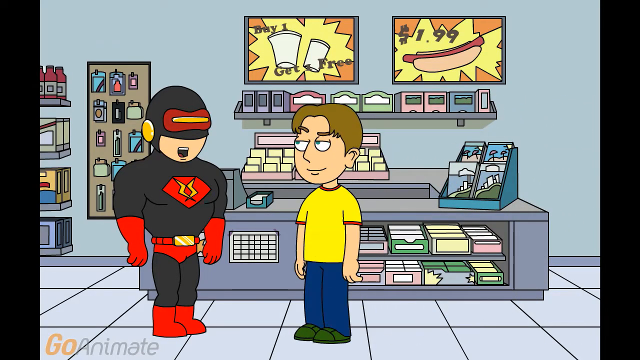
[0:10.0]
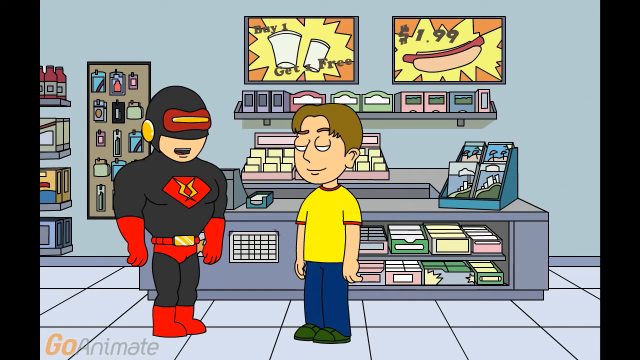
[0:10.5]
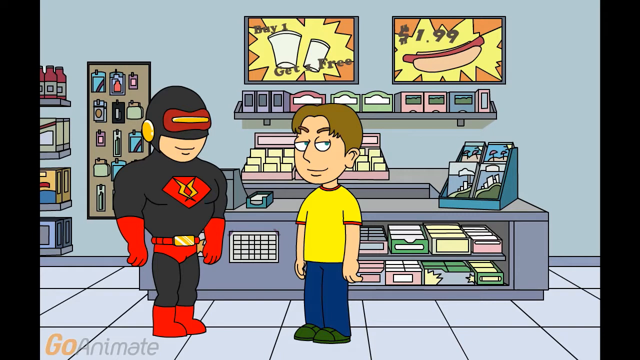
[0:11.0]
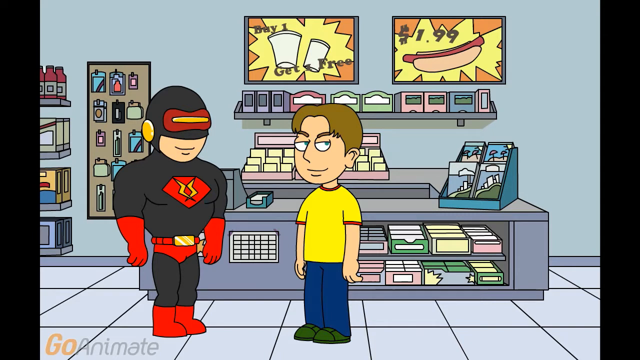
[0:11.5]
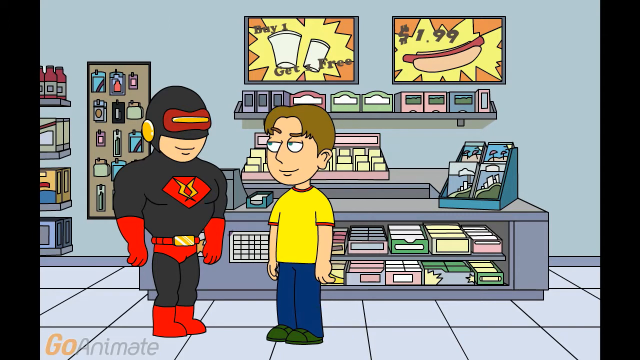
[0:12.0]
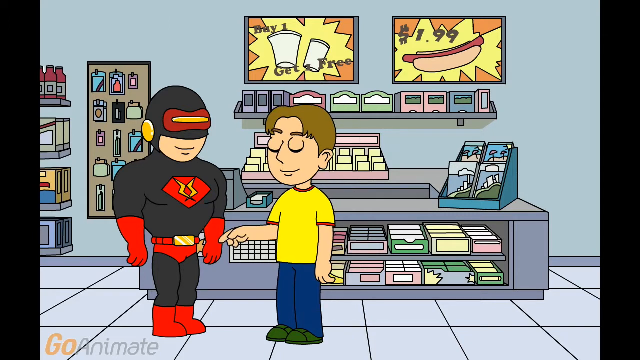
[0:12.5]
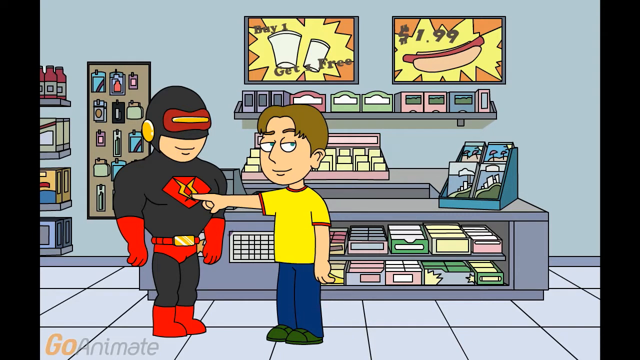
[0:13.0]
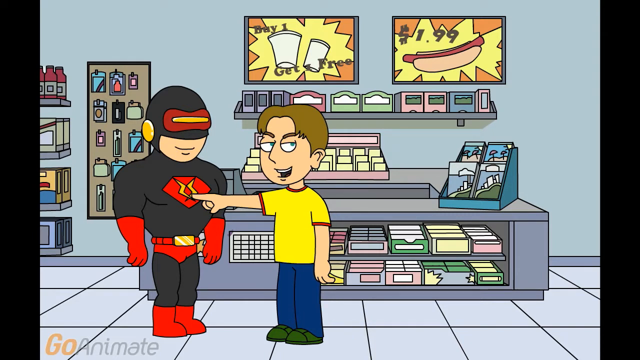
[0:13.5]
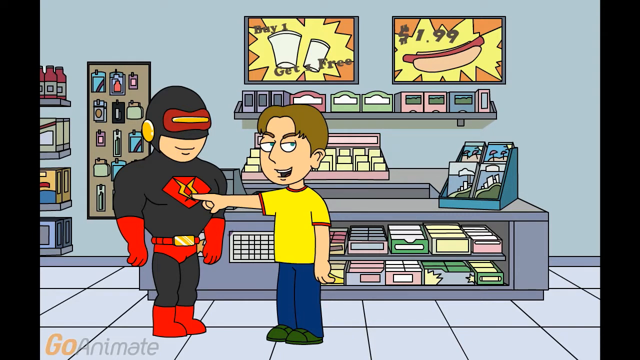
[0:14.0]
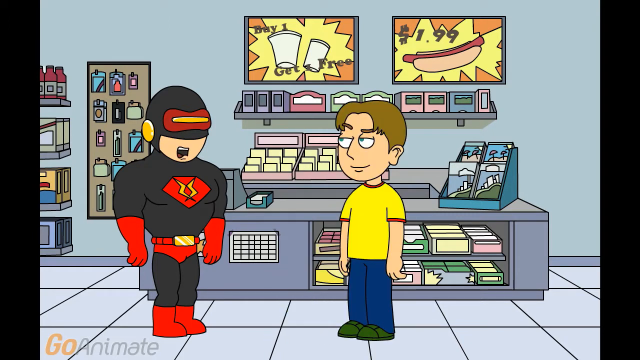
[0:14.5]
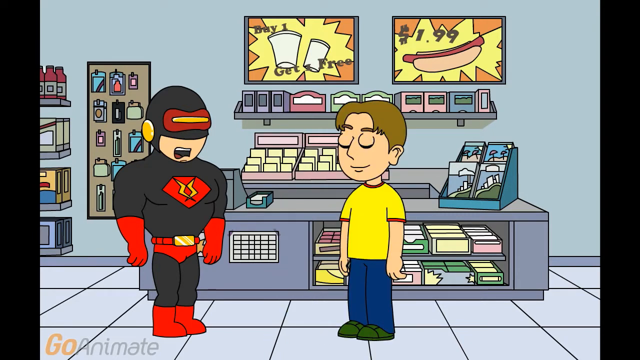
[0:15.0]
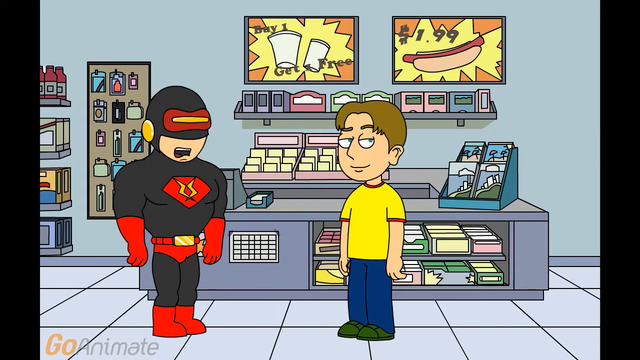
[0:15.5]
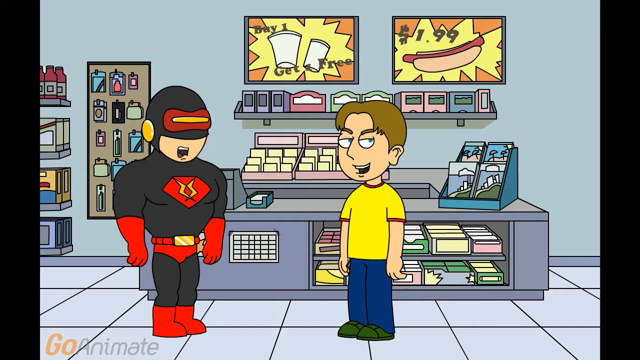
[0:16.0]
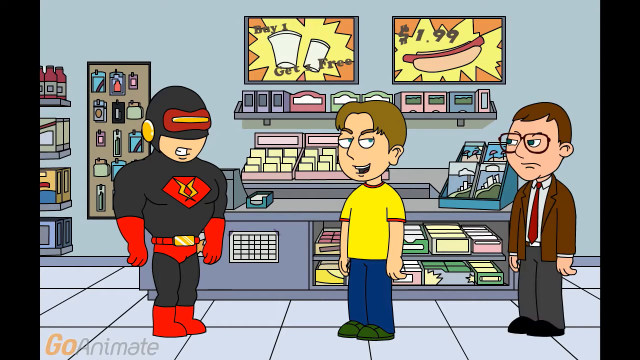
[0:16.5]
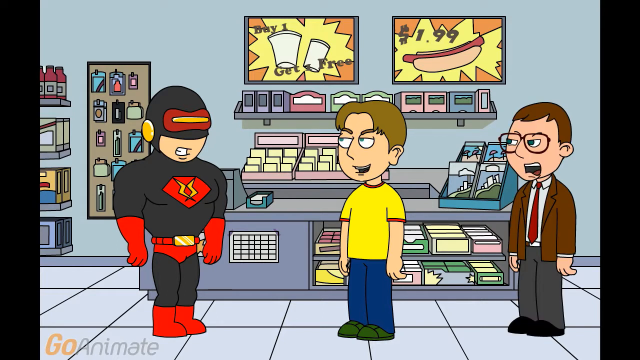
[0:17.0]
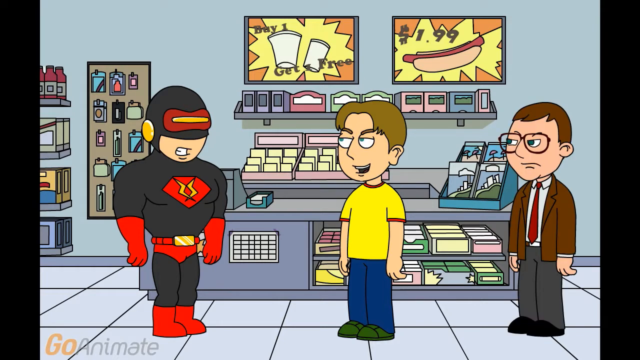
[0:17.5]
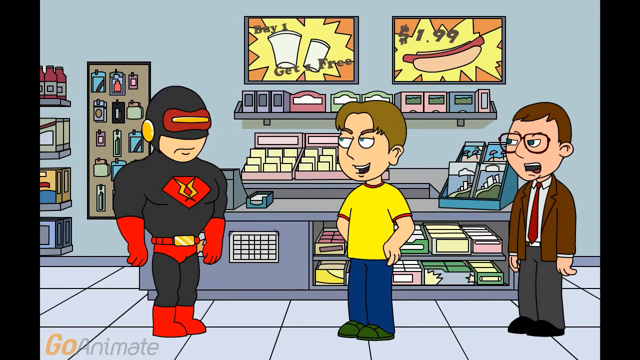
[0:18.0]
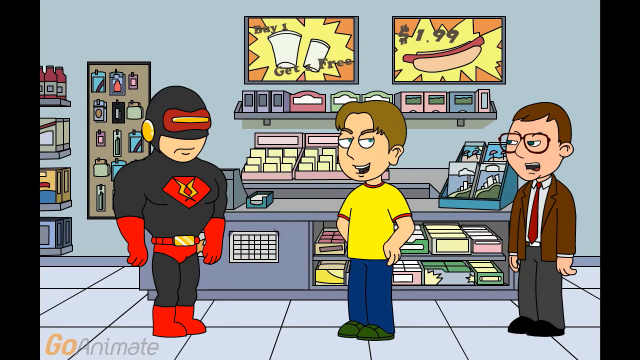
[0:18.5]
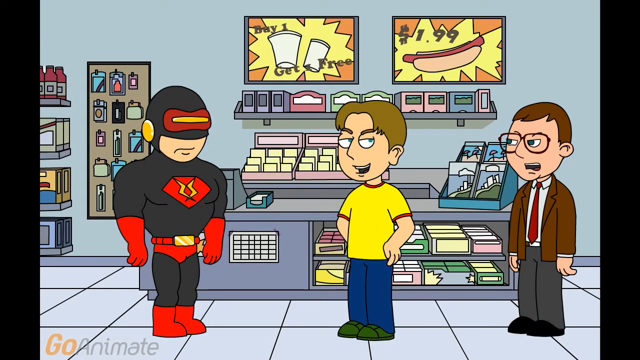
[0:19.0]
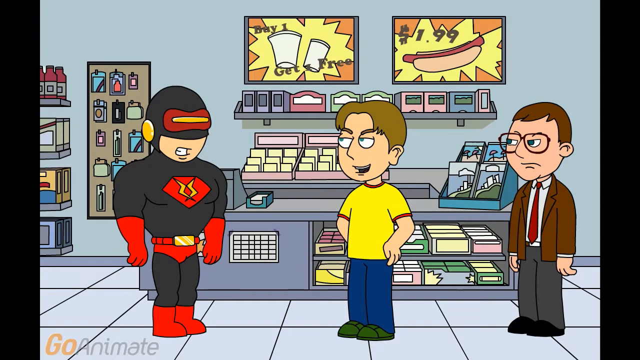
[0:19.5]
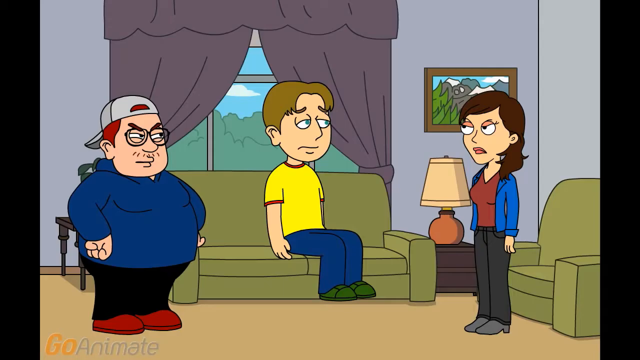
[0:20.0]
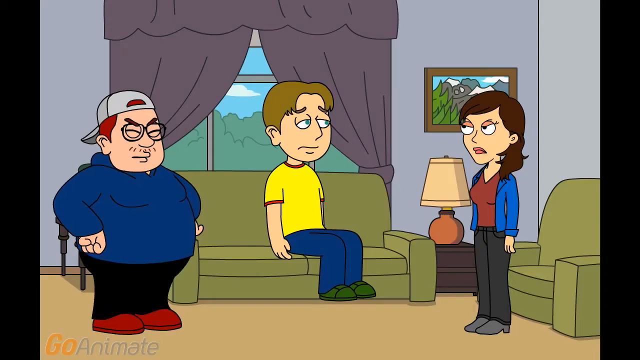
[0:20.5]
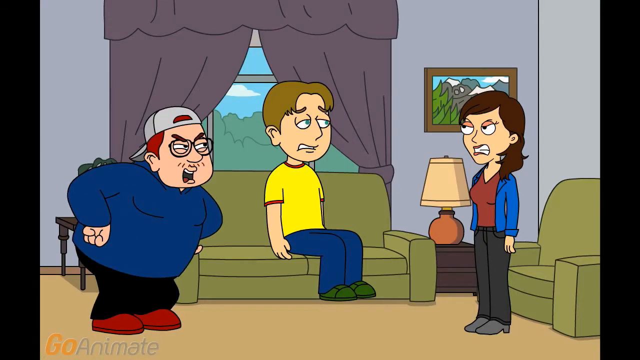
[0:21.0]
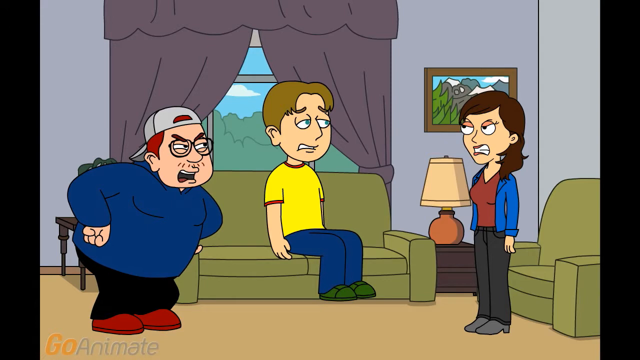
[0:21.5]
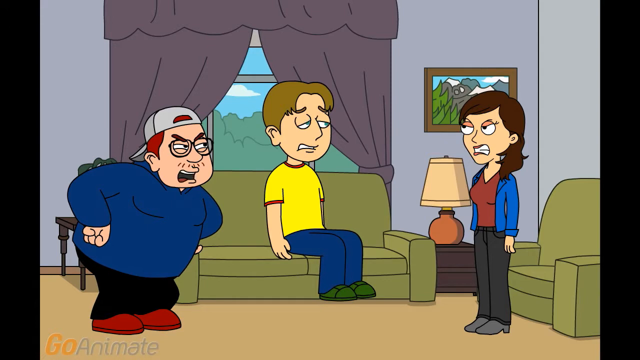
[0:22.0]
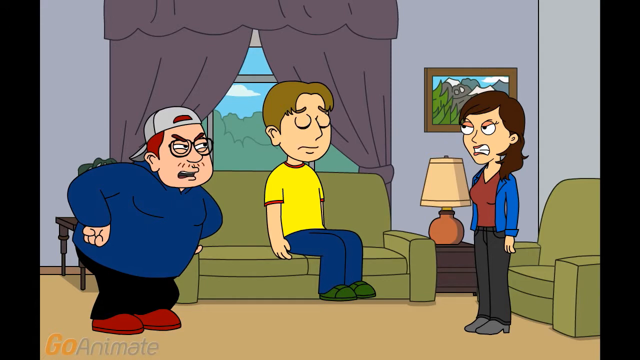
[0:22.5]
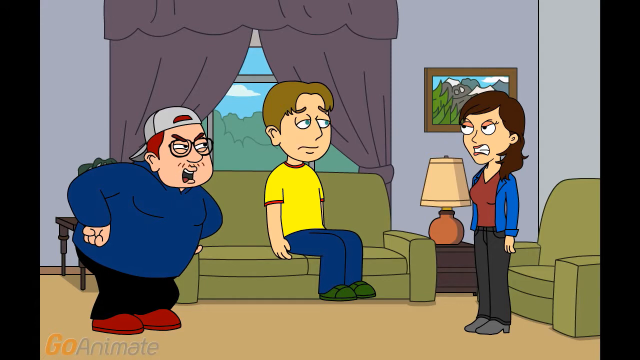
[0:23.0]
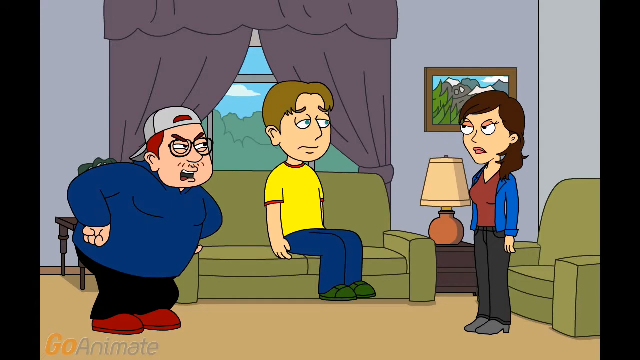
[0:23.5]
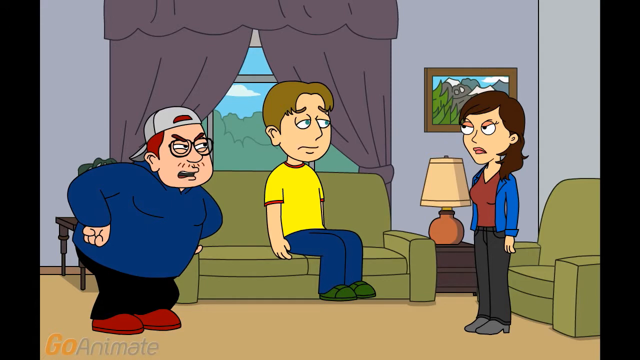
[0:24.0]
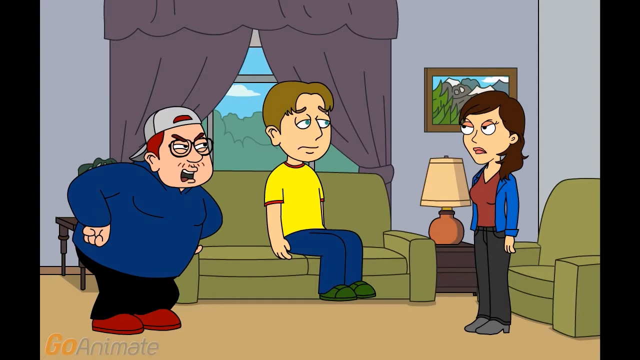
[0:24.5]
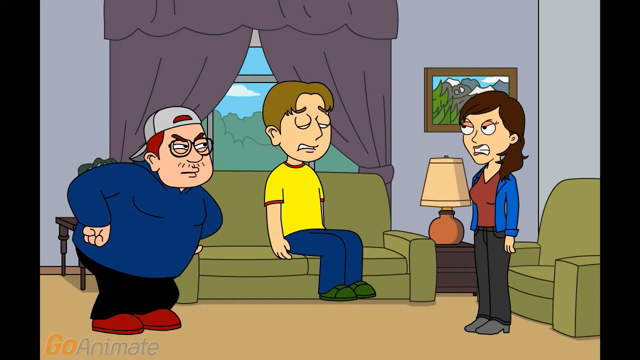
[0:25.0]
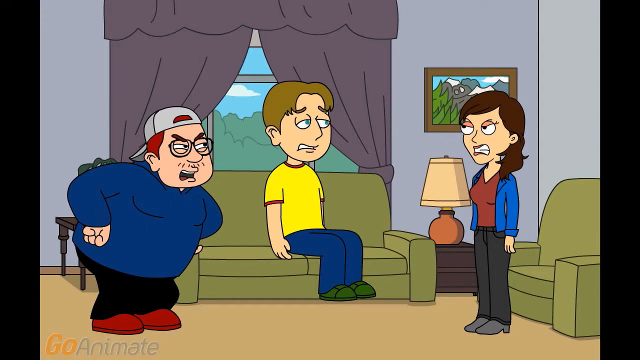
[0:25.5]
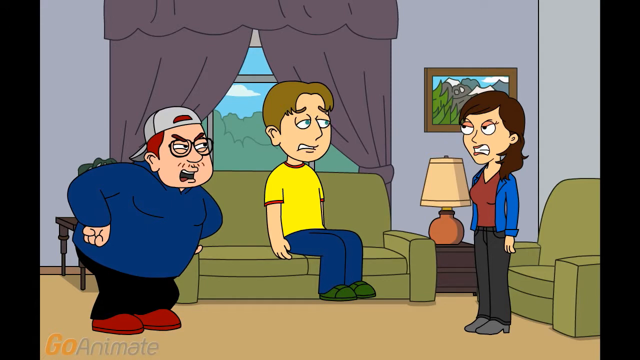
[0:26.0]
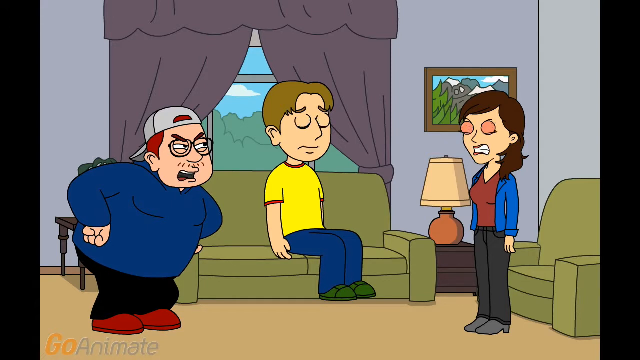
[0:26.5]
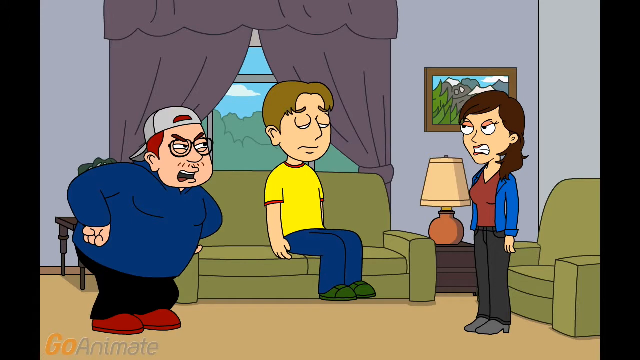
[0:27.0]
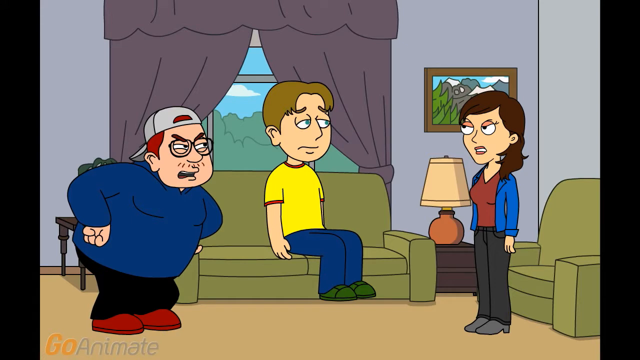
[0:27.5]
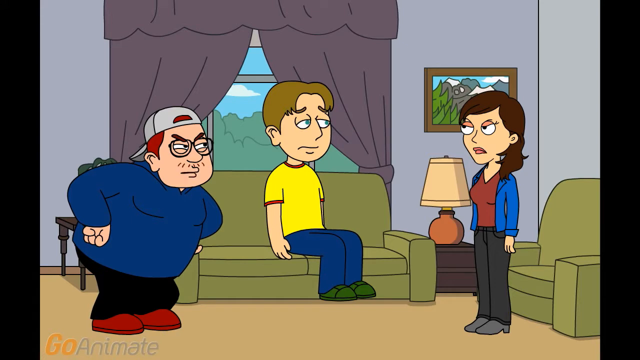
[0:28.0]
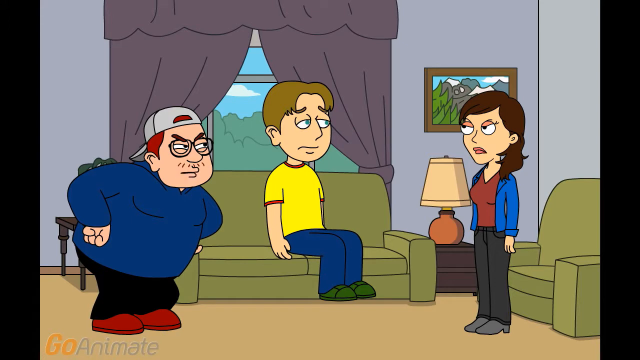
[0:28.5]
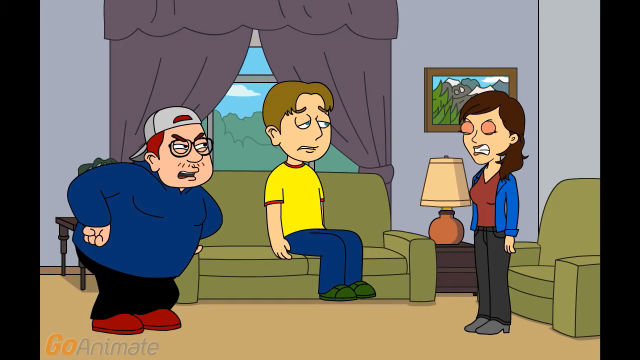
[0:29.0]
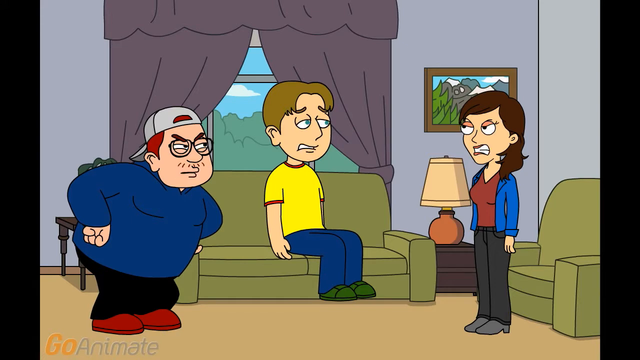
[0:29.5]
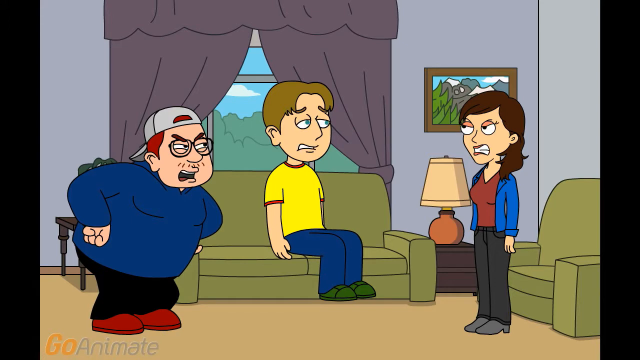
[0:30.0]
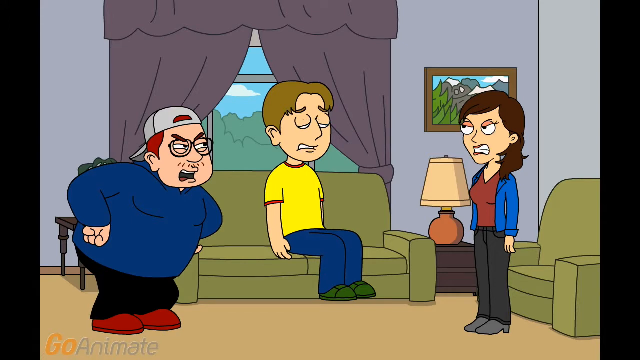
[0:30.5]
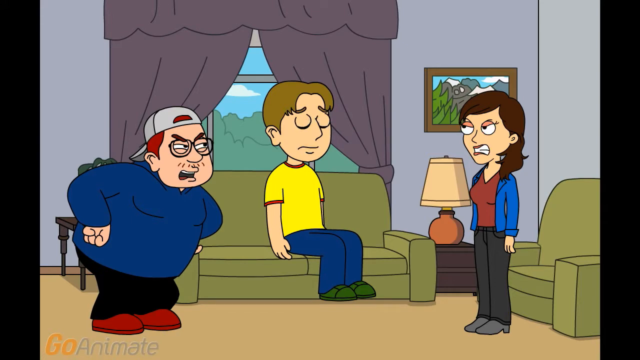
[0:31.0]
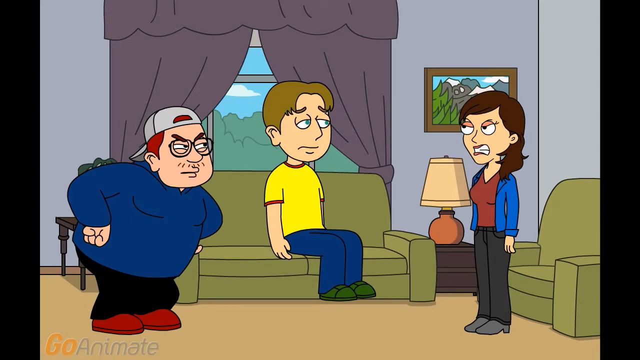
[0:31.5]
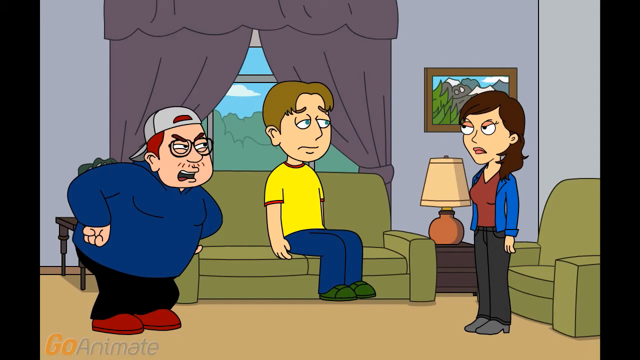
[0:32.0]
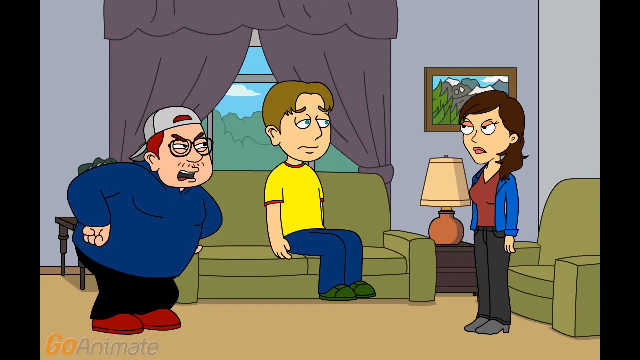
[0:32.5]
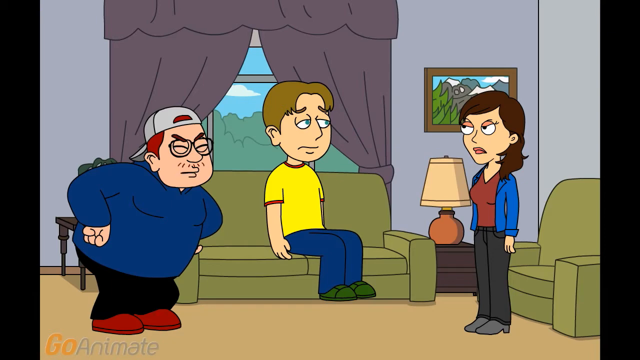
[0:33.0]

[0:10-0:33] The male and the superhero look at one another. The superhero seems to be saying something, and they talk back and forth. The male character points to the emblem on the superhero's chest. A nerdy-type man shows up on the right side, wearing a suit, glasses, a red tie and a brown jacket. He seems to be talking to the two of them about something. The scene cuts to a living room, where the same male character is flanked by what appear to be his parents. They seem upset about whatever he has done, and he seems a little guilty. The mother and father have very angry looks on their faces and are sort of giving him the riot act while he sits on the couch taking it.